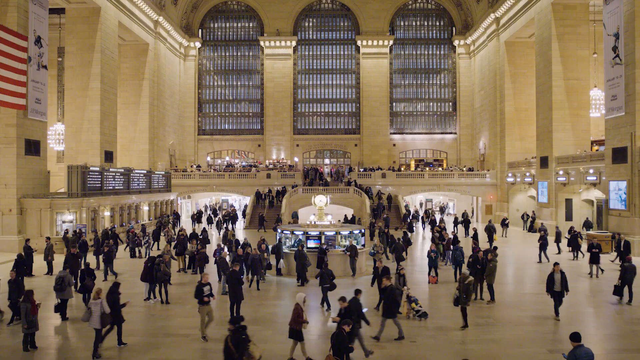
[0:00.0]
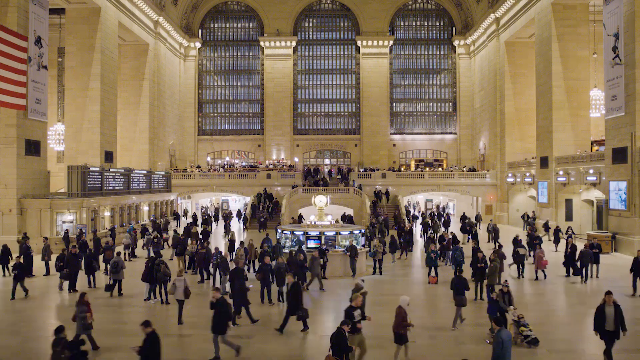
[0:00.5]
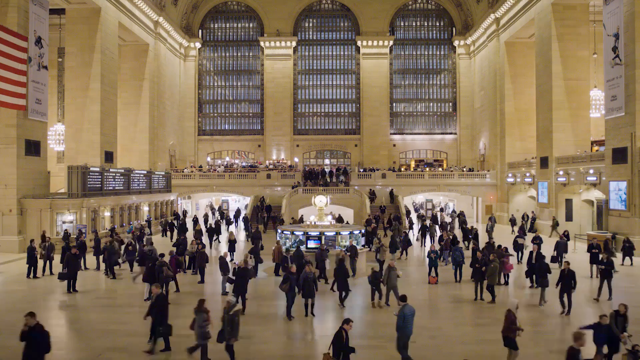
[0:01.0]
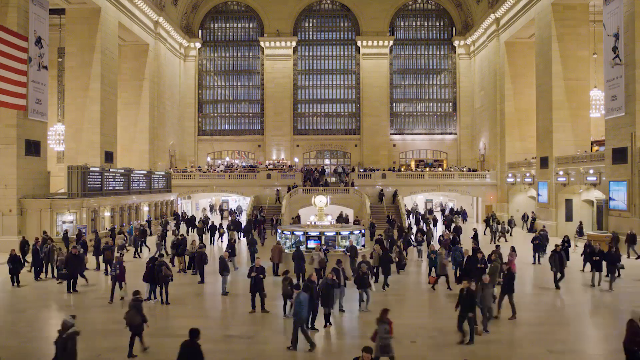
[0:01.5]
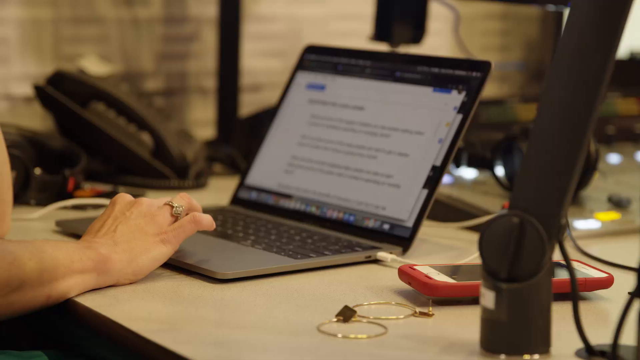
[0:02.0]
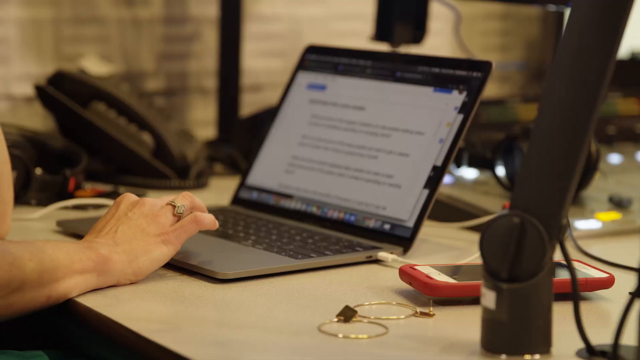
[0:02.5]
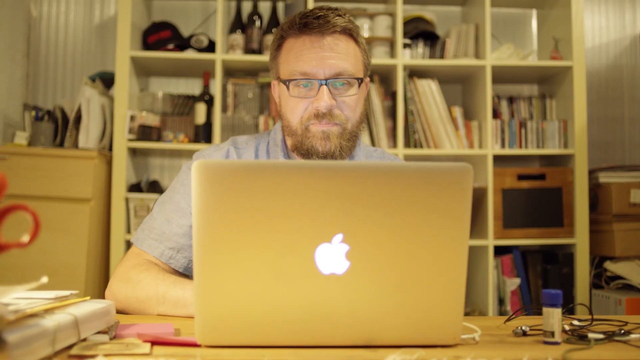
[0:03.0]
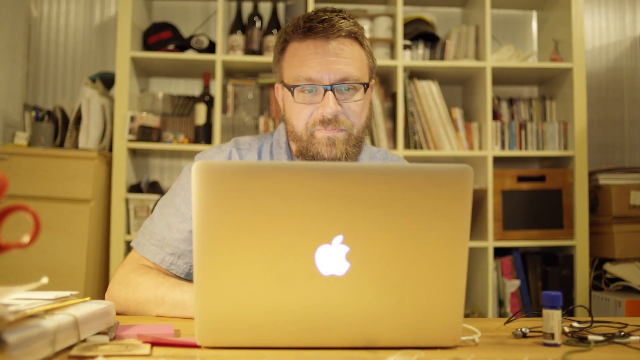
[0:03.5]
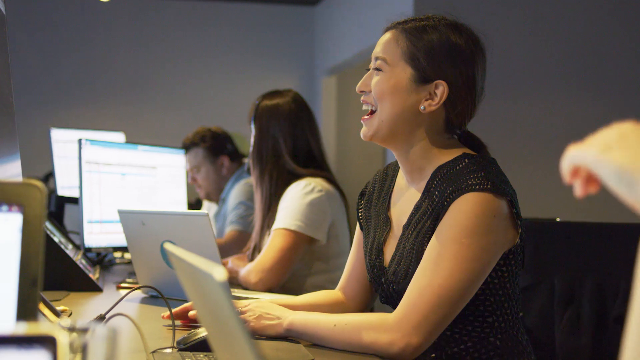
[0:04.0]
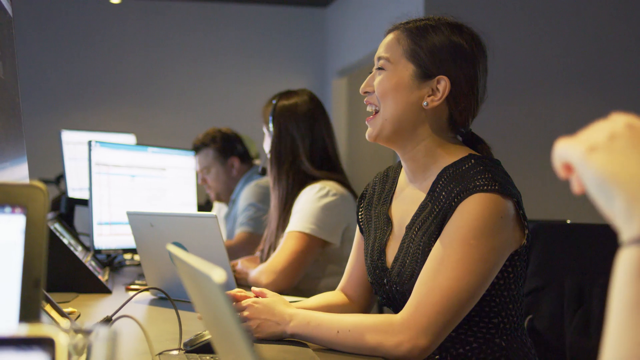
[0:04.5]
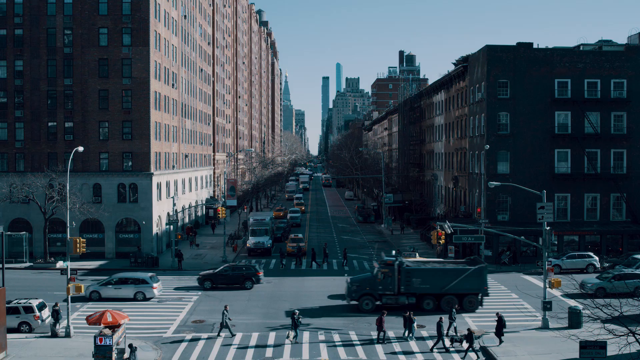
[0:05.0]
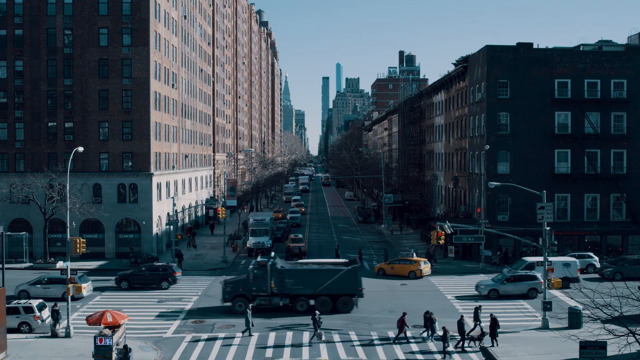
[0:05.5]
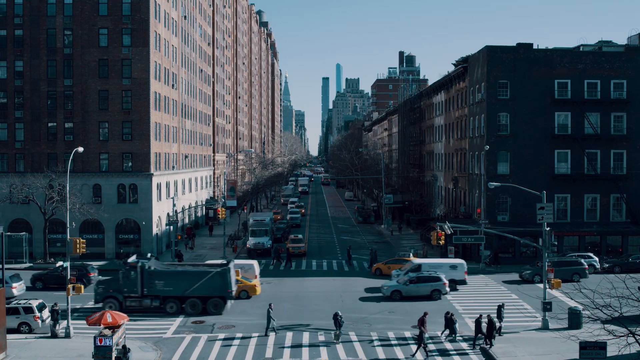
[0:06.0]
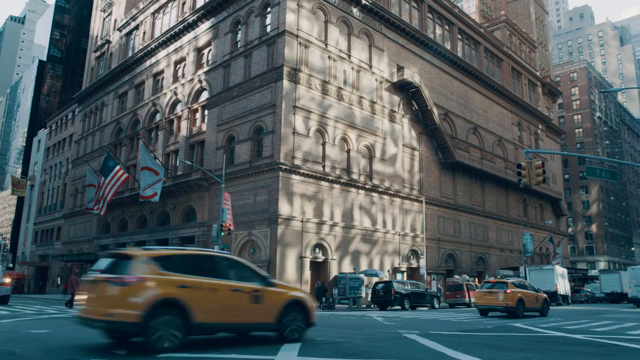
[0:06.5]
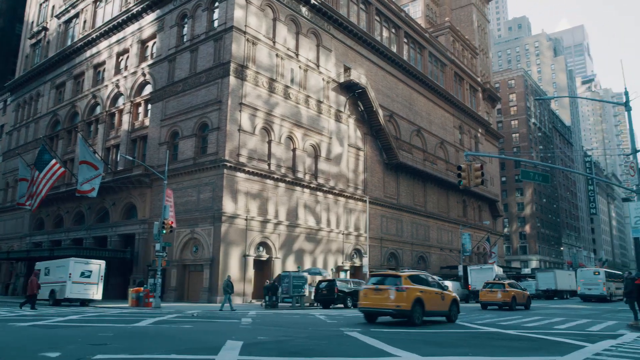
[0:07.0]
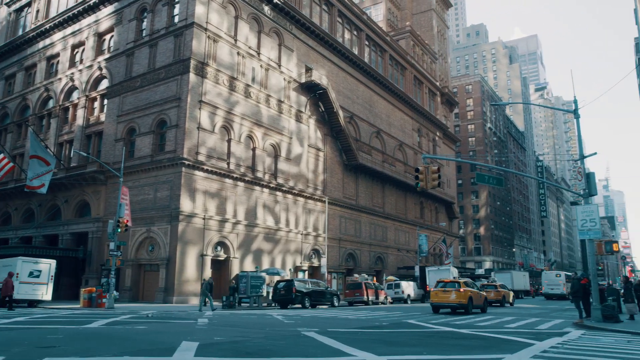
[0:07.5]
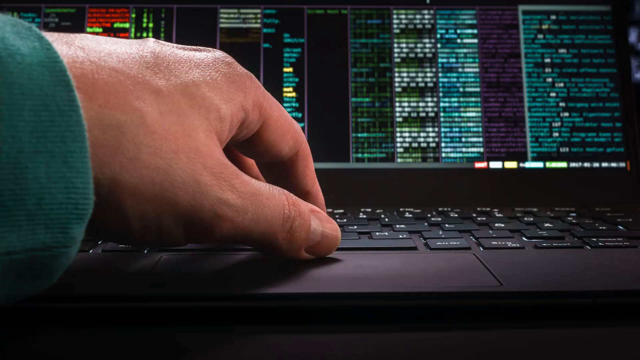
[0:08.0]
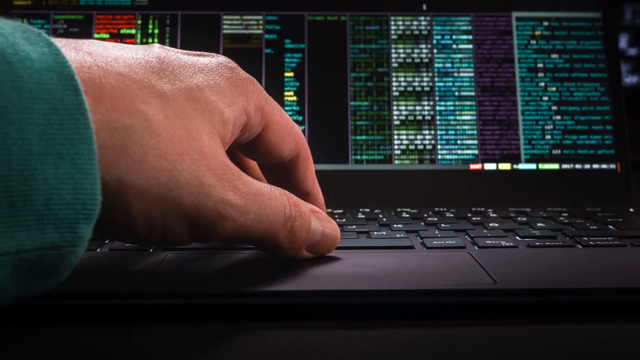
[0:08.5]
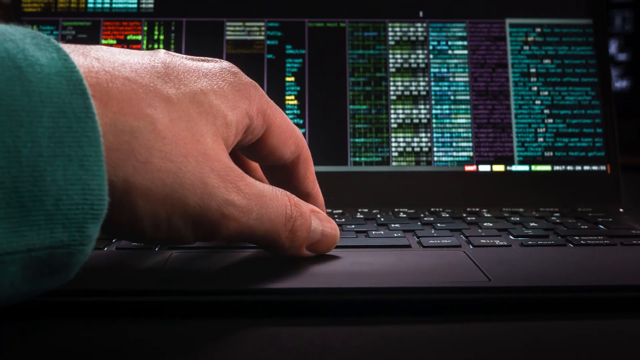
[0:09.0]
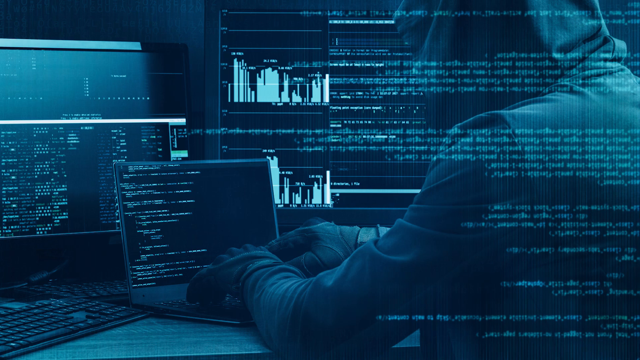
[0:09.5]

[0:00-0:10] People walk around inside a very large building, moving very quickly. There are many people inside, both men and women. In the background are three large arched windows that appear to be covered with wood blinds, and the interior walls are pale pastel yellow. Next, a man sits at a desk with an Apple laptop computer on top of it. In the background behind him is a beige bookcase, and to the left of the bookcase is a beige cabinet with some items sitting on top of it.